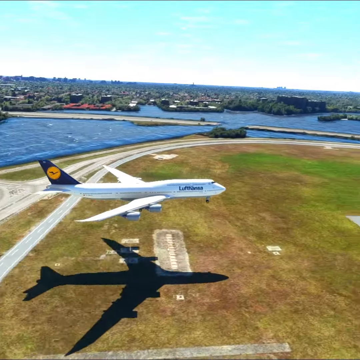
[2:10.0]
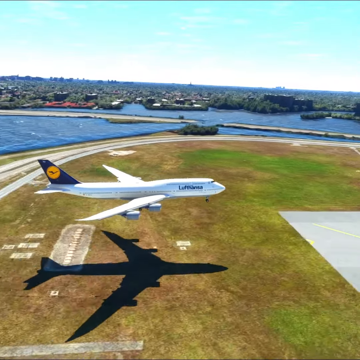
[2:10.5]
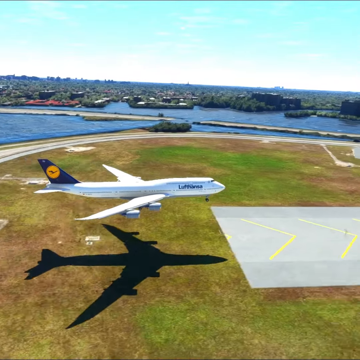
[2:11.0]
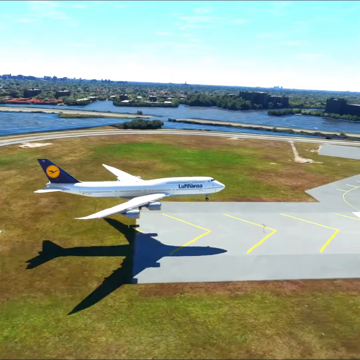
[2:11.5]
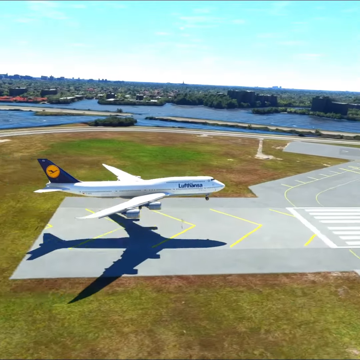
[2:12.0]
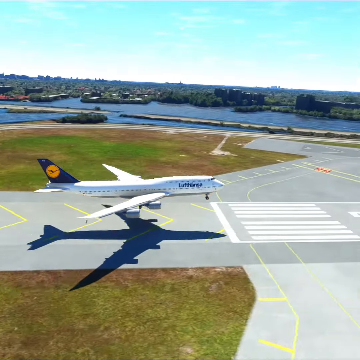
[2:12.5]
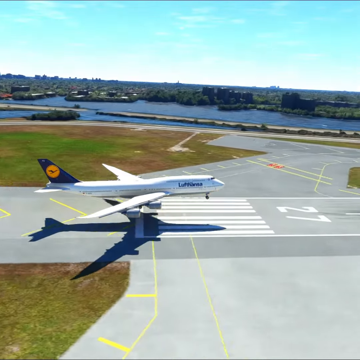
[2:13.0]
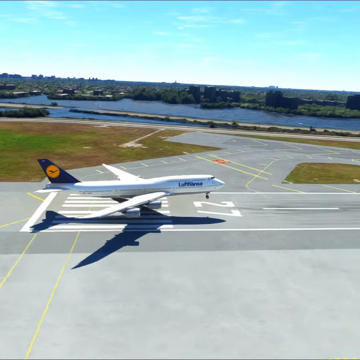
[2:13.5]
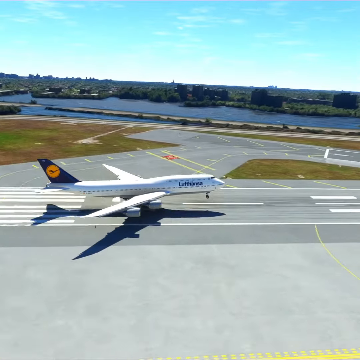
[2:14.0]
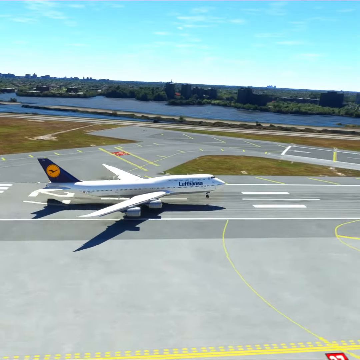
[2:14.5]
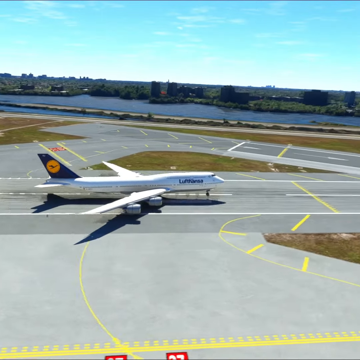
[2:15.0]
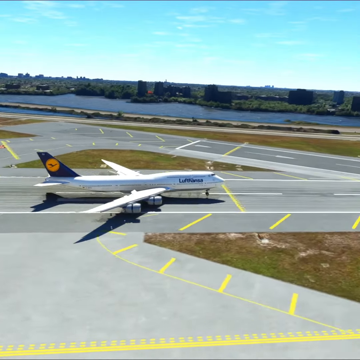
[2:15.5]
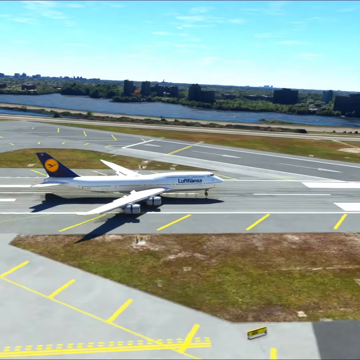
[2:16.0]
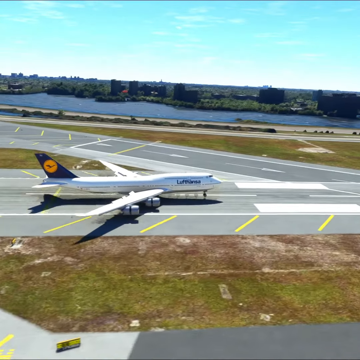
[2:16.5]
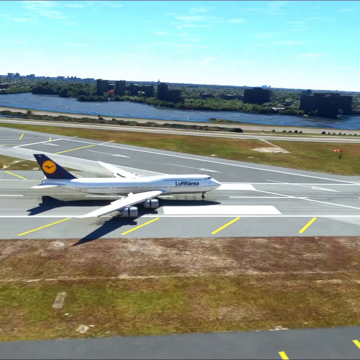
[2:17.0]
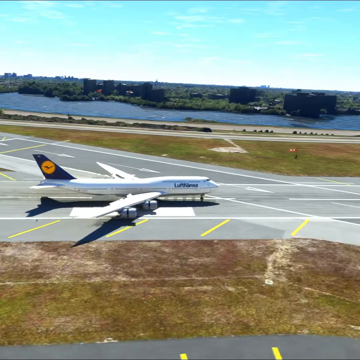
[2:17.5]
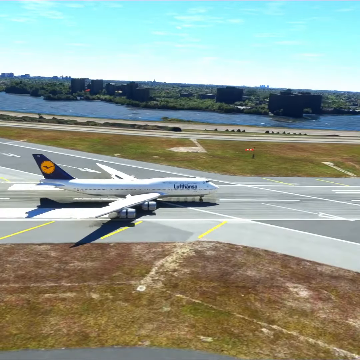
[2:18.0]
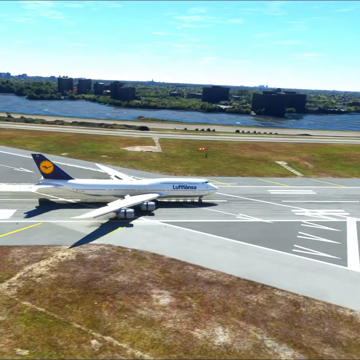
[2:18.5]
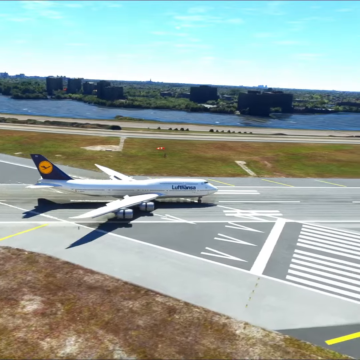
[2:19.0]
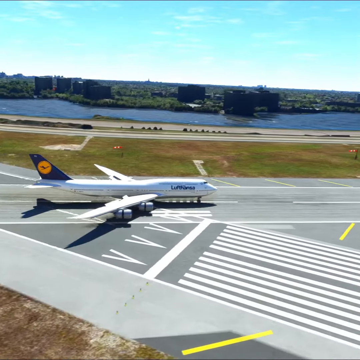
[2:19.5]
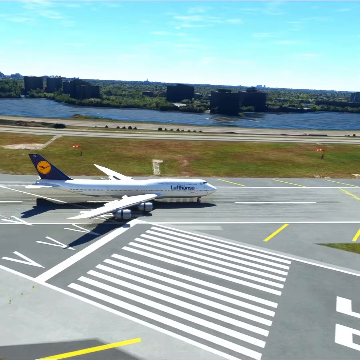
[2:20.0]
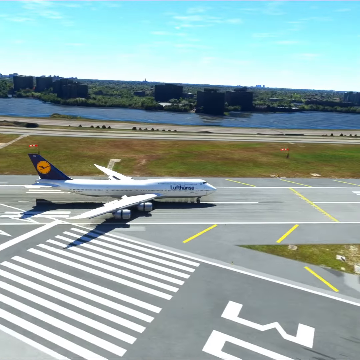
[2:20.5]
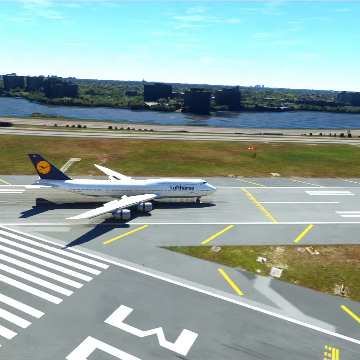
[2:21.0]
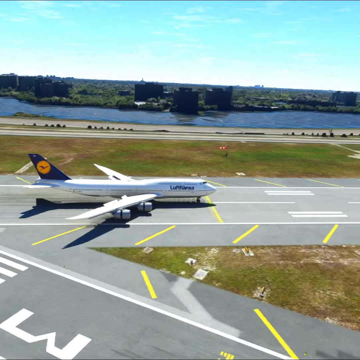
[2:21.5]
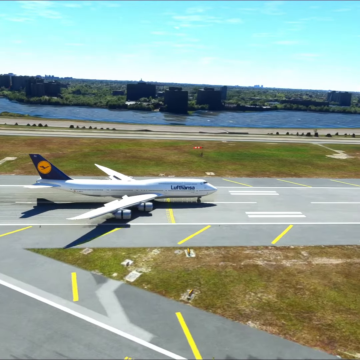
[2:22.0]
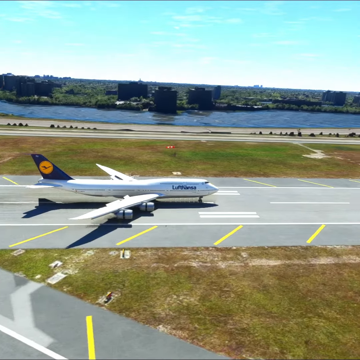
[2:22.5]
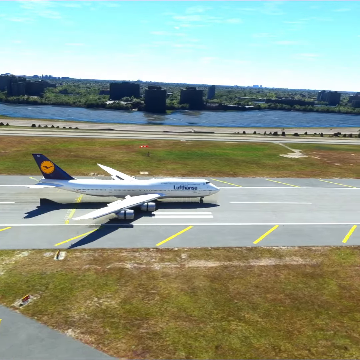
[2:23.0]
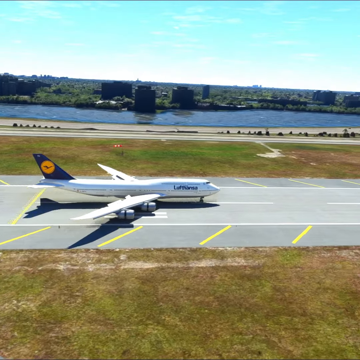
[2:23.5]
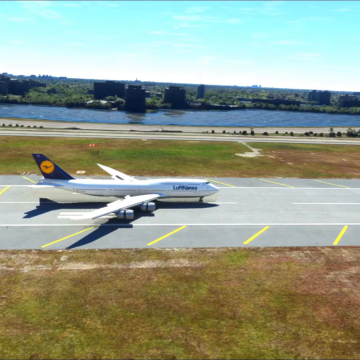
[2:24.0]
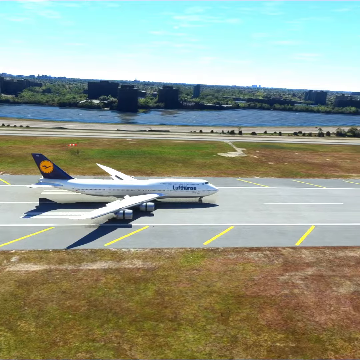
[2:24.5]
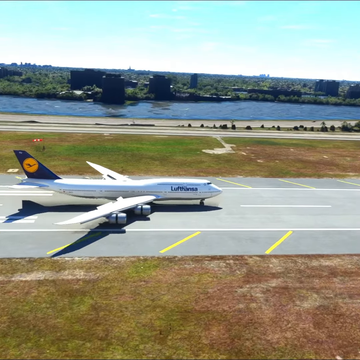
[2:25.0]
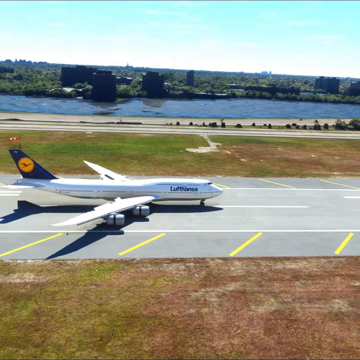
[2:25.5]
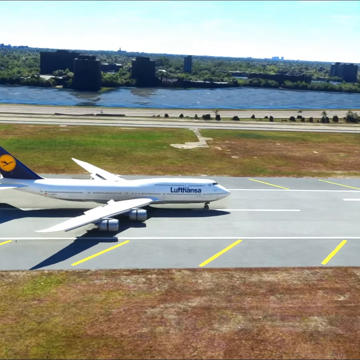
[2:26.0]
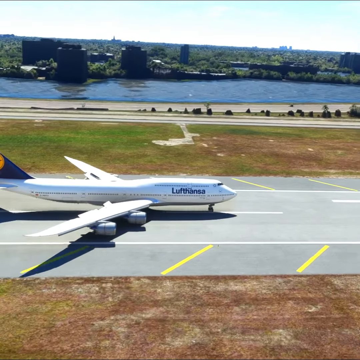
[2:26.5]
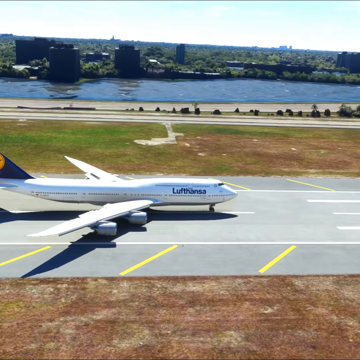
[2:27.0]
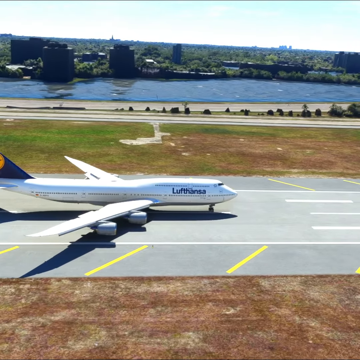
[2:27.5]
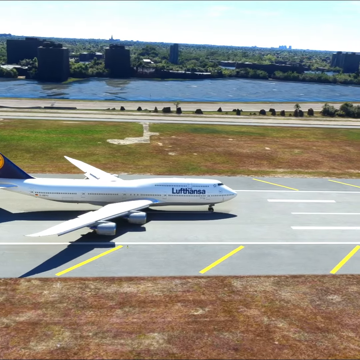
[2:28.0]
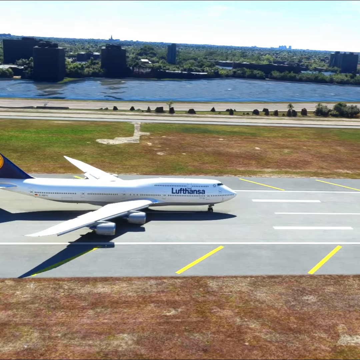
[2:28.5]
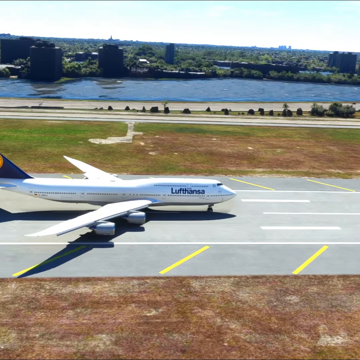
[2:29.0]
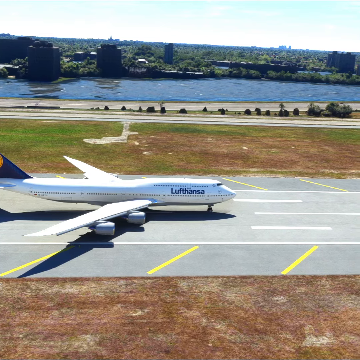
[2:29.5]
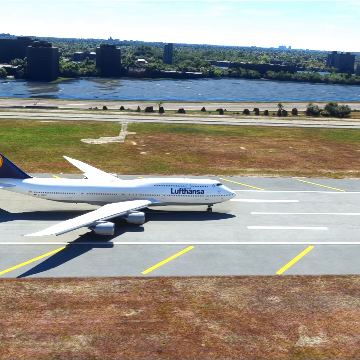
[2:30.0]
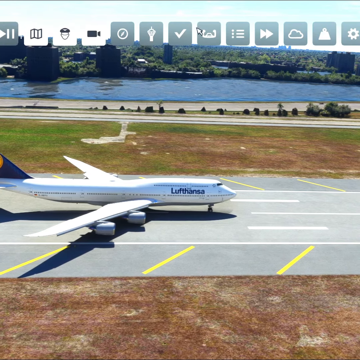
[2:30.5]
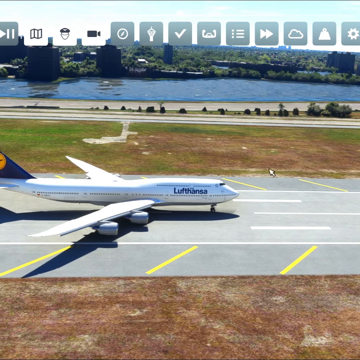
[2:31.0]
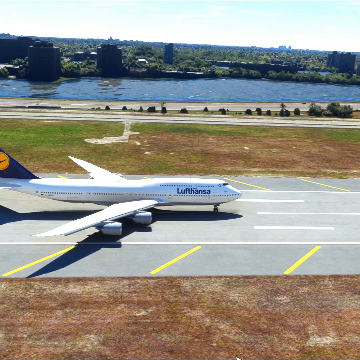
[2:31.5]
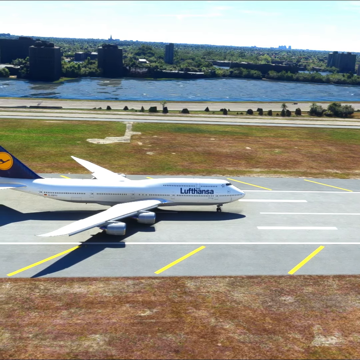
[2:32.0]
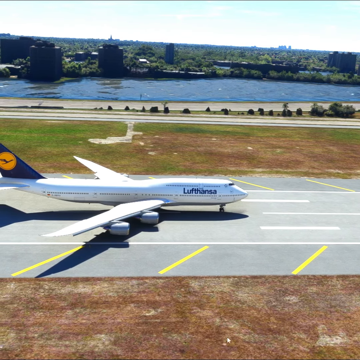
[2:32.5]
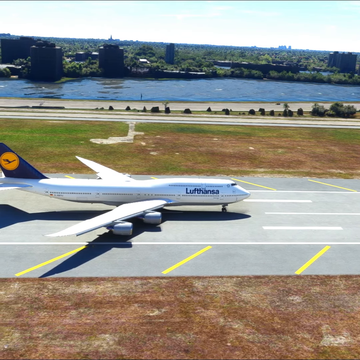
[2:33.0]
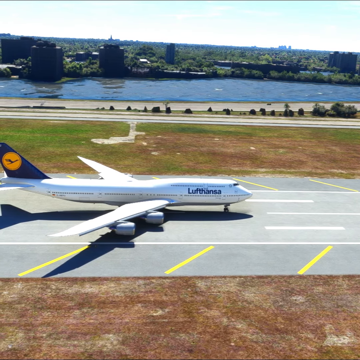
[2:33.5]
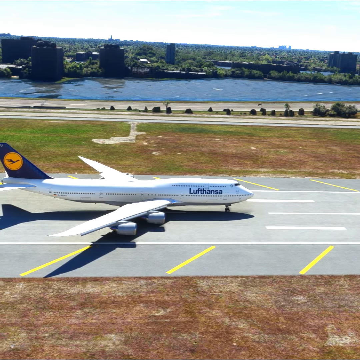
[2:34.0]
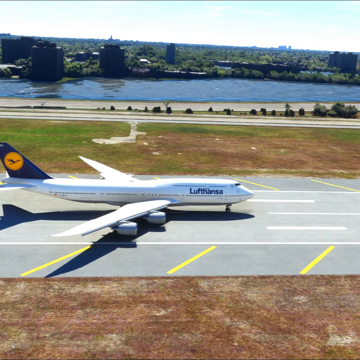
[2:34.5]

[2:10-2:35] A white passenger aircraft flies low with its landing gear down, getting ready to land, at the edge of the runway below. There is water in the background. The plane's large shadow is visible on the ground below because it is very low. The end of the field is green with some brown patches of dried grass, and then the edge of the runway appears as the plane descends onto it. The plane touches down smoothly on the gray paved runway, which has white and yellow markings. Behind the runway are water and trees on the other side of the water, with a light blue sky with wispy clouds above. The plane continues down the runway on the ground, with grass on either side, and comes to a complete stop in the middle of the runway.